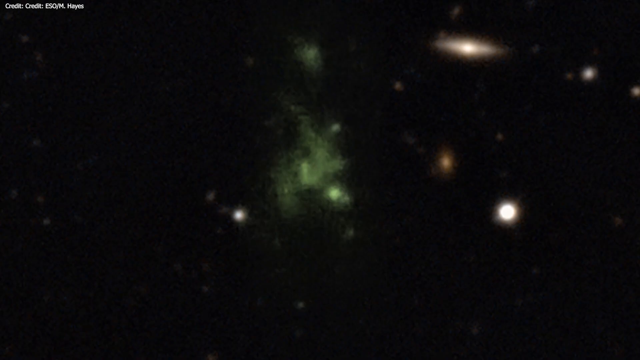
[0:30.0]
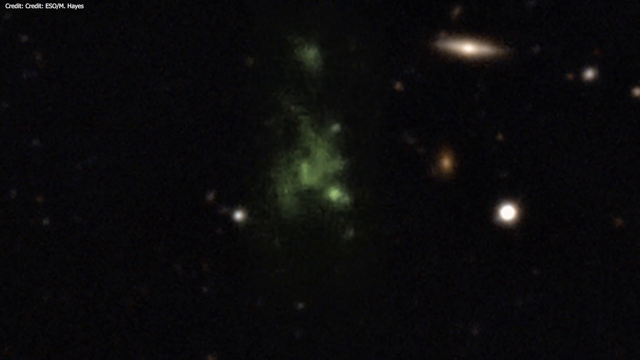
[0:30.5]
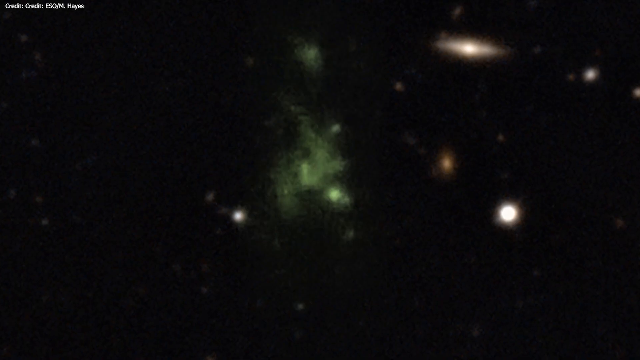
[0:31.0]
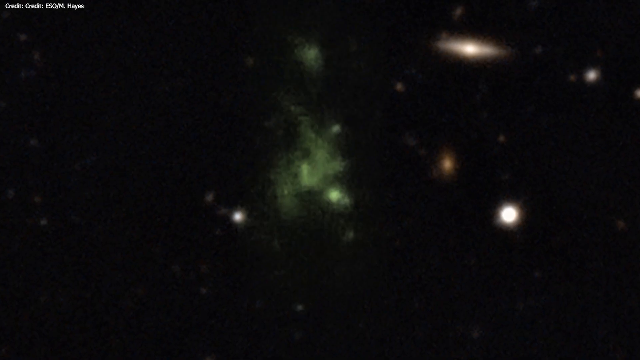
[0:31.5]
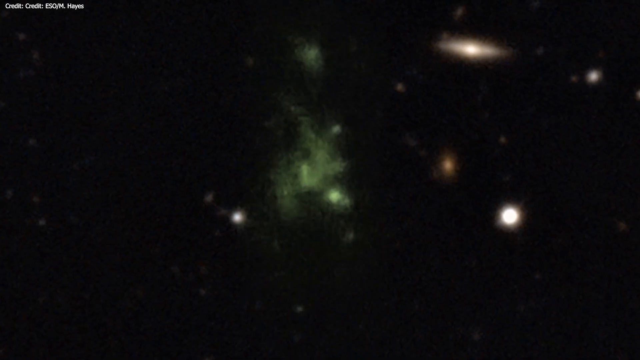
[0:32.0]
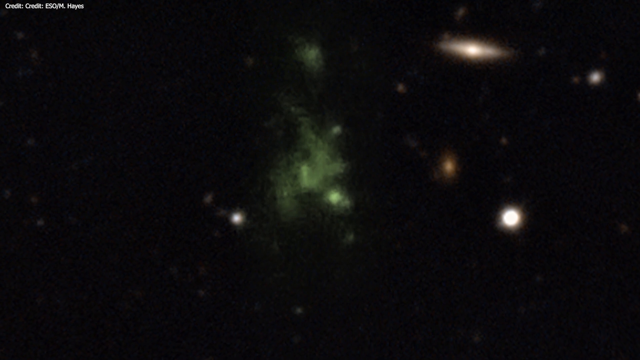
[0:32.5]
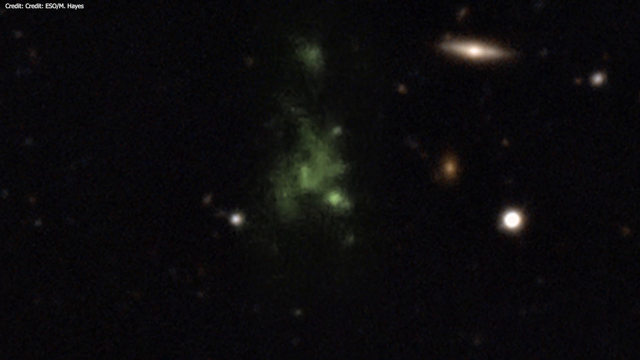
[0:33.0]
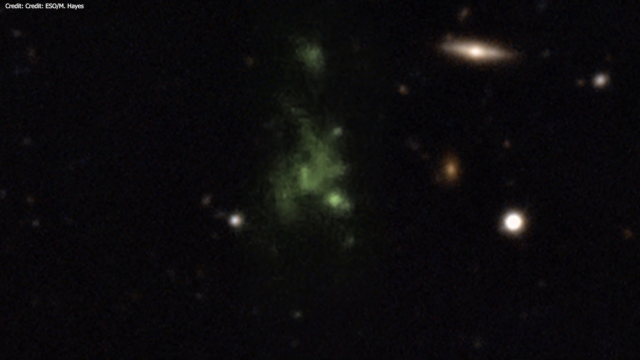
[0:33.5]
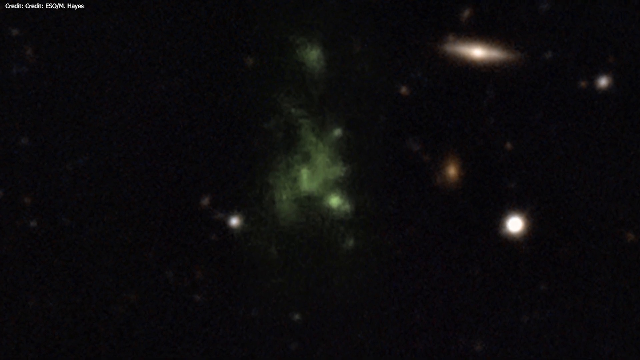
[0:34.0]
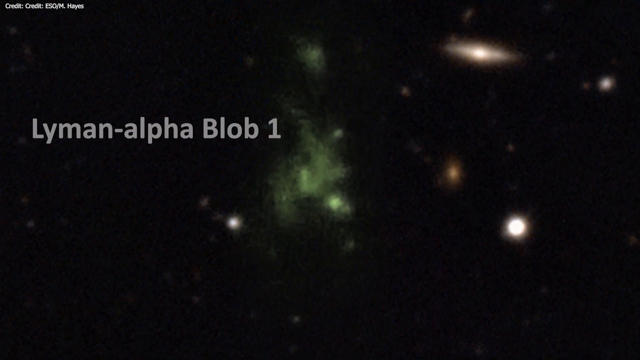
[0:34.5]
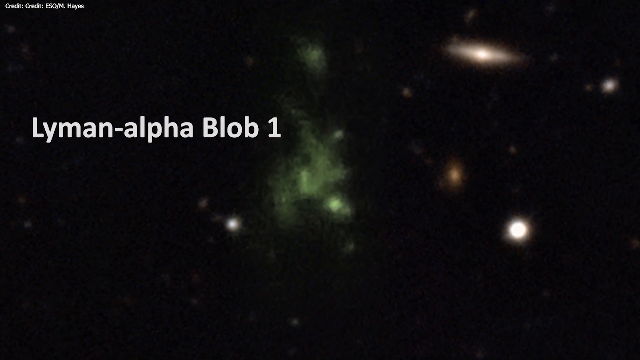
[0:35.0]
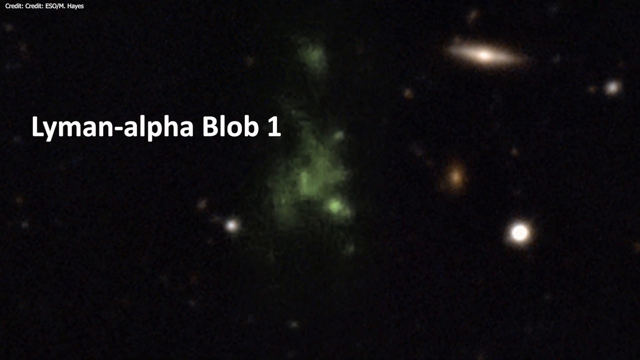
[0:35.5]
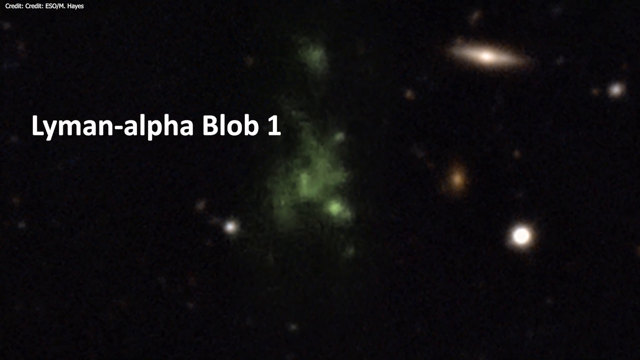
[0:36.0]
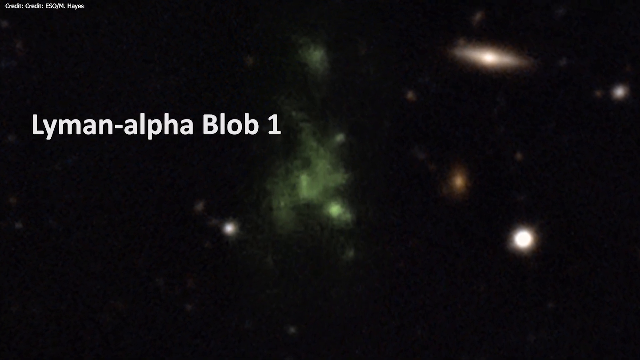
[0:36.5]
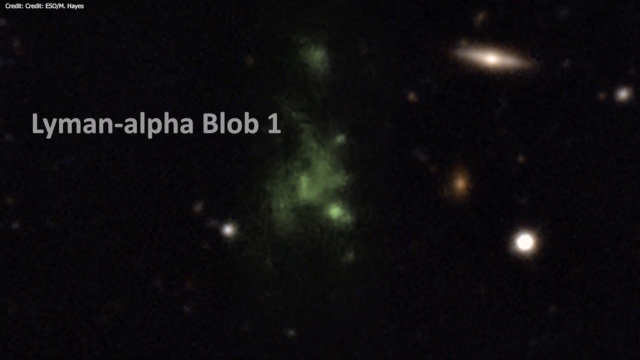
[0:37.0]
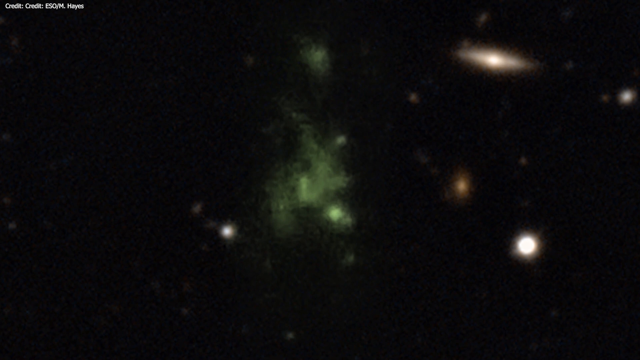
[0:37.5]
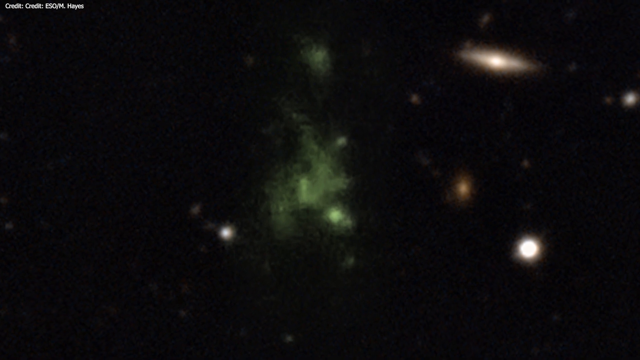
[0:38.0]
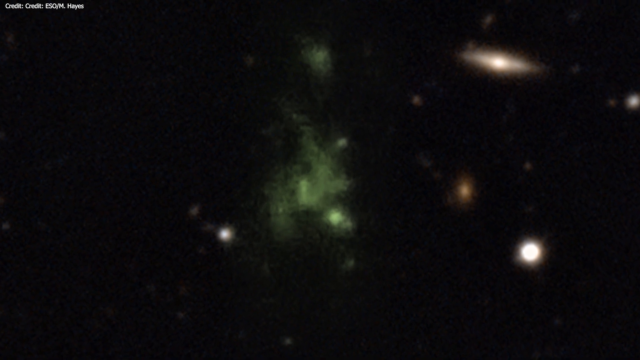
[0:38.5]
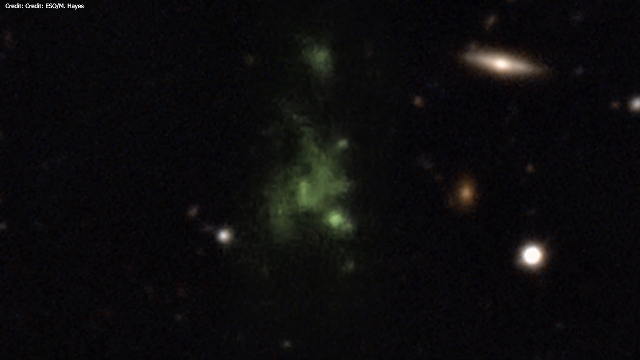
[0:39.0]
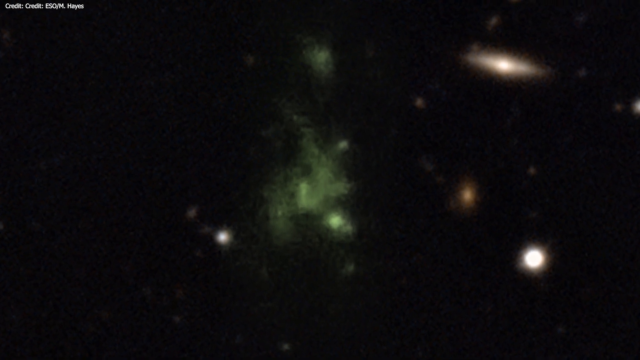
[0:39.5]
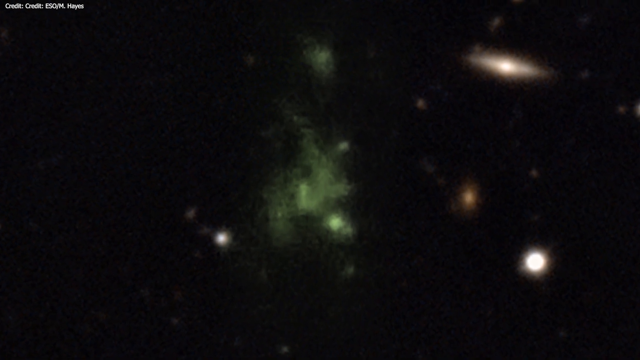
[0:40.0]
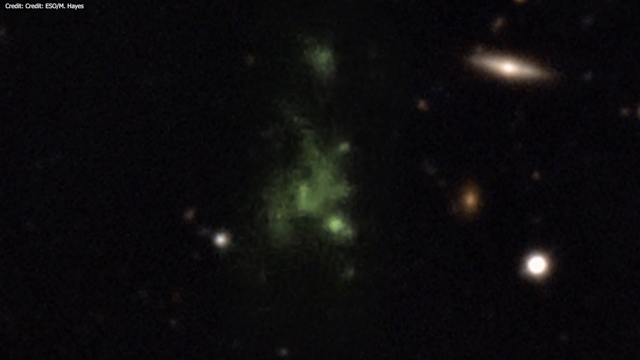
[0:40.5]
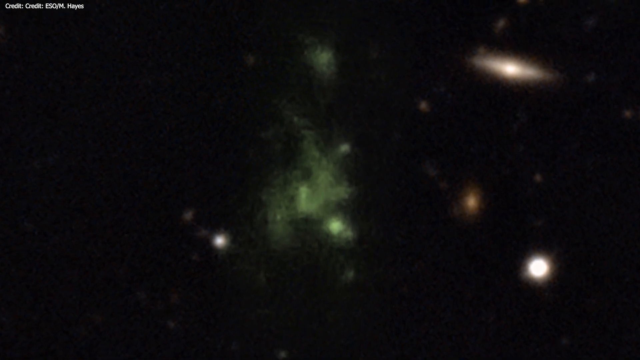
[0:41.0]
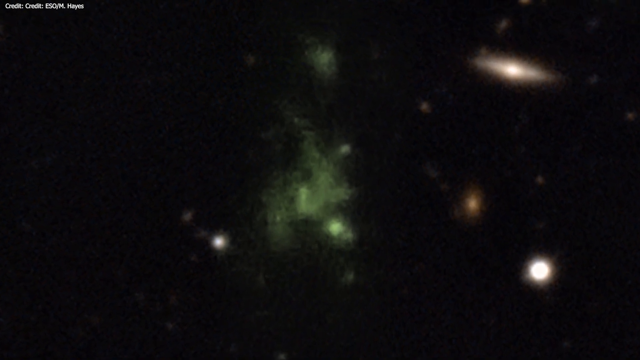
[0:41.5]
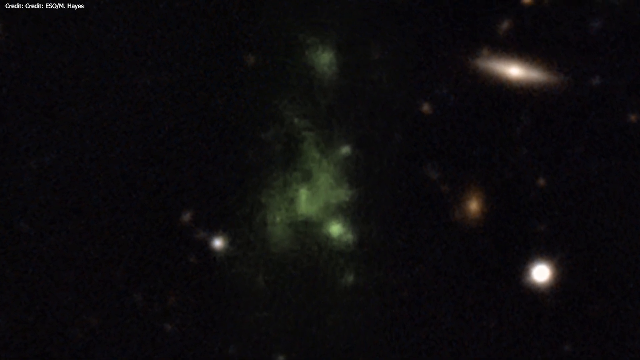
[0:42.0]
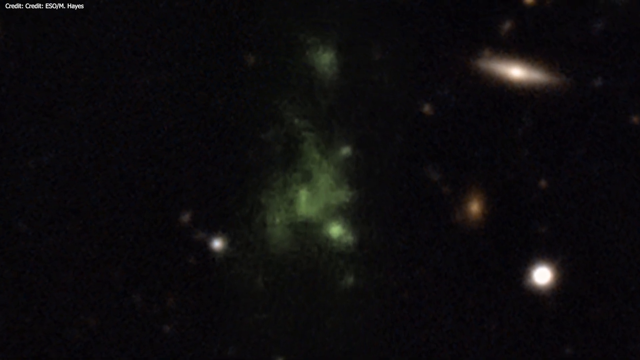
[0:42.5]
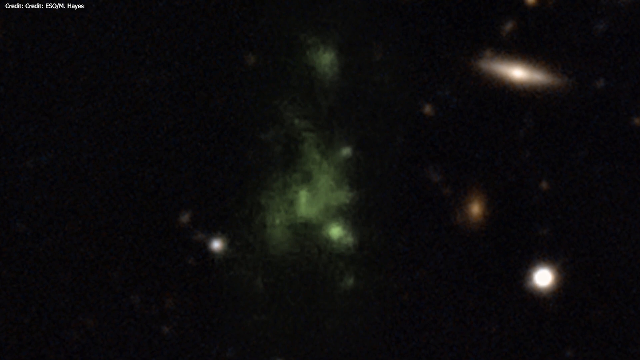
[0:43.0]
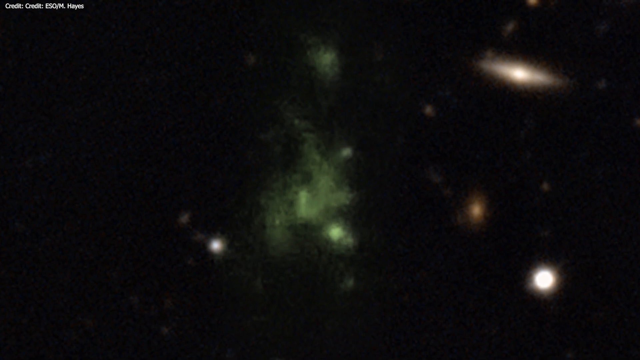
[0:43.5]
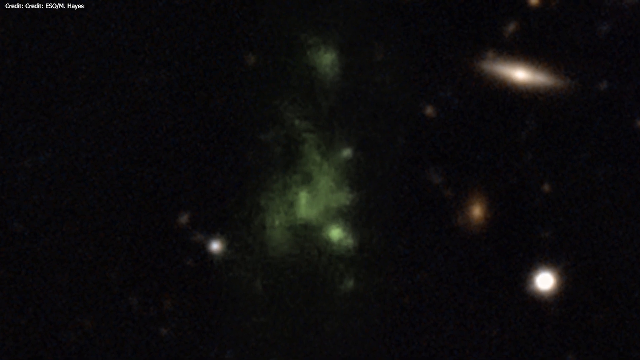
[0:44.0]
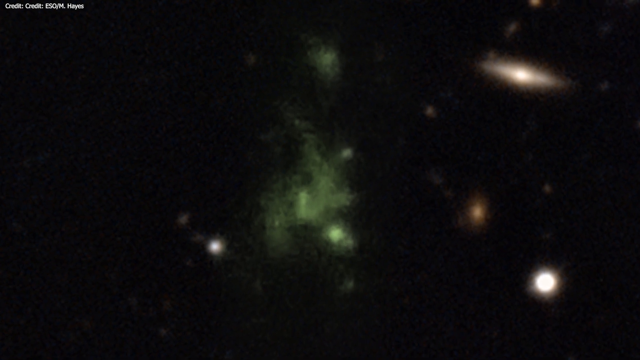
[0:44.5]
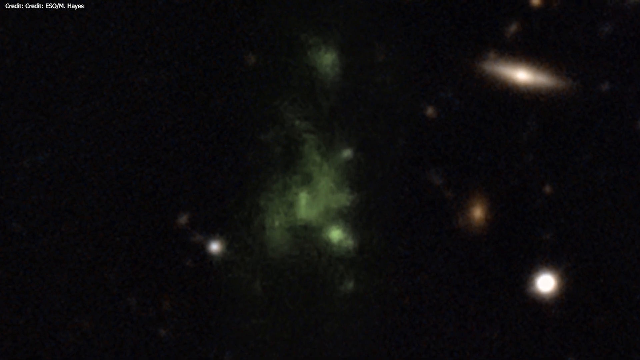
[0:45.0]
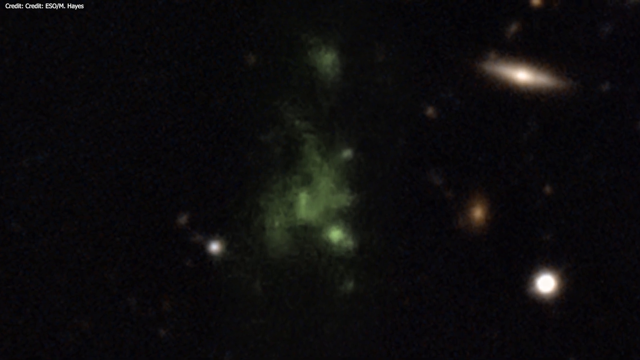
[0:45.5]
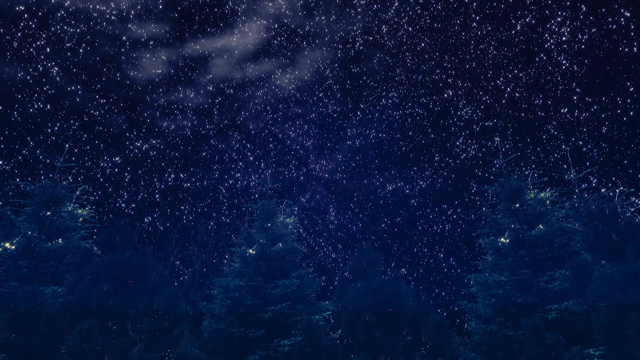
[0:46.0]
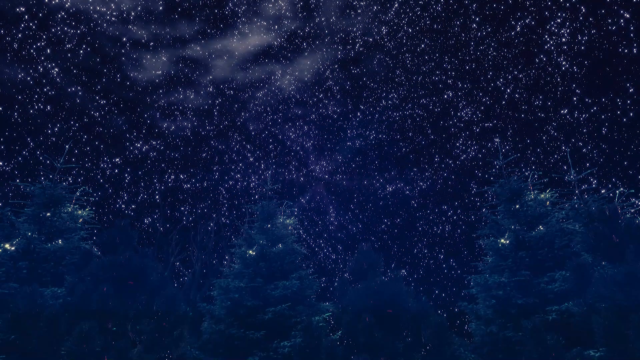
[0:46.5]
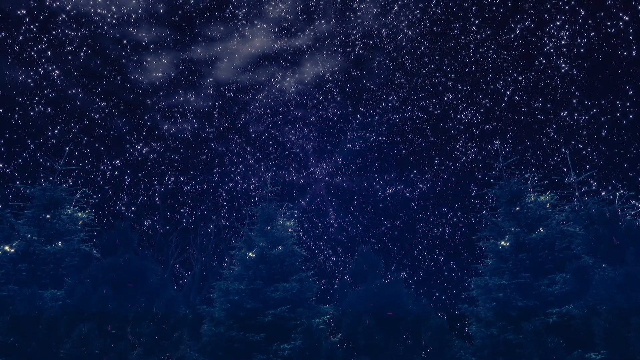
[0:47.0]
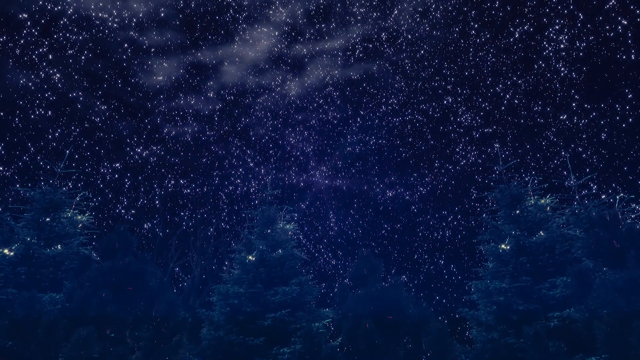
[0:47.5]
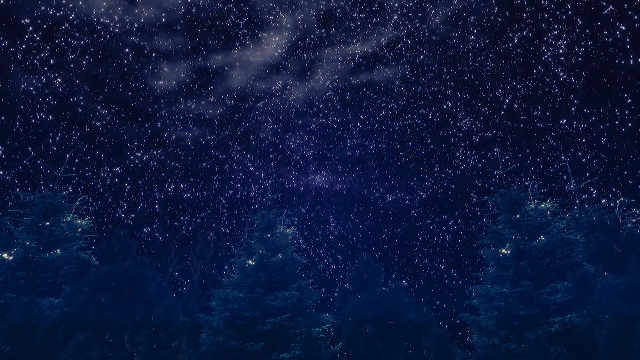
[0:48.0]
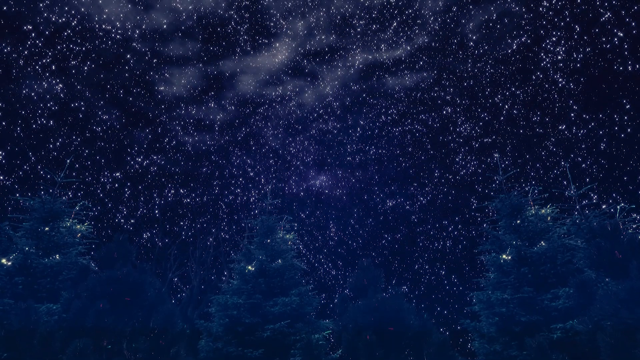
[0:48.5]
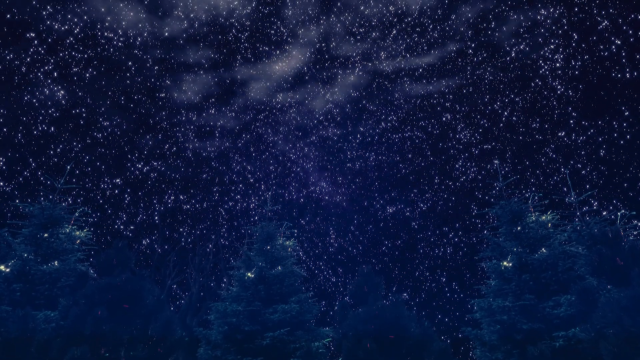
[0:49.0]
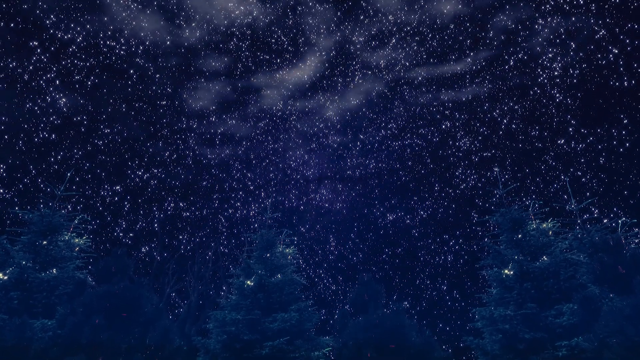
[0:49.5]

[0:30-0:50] A black screen shows a green gaseous body in the middle, with "Lyman Alpha Blob 1" in white text. The body is greenish yellow in the middle of a dark piece of space with some stars around it; it is sort of a green, almost diamond-like or very abstract shape. To its bottom left is a white circle, to its right is a gold circle, and beneath that gold circle is another white circle. Above both the gold circle and that white circle is an orb-like, almost disc-like bronze-colored object that almost looks like a planet, to the upper right of the blob. There are also some other gold flecks. The screen then switches, for just a moment, to a dark blue, almost cobalt sky filled with white stars. At the top is what could be clouds, looking like a white gaseous body, and there is some difference in texture toward the bottom. It is unclear which part of space this is, but many constellations are clearly visible.